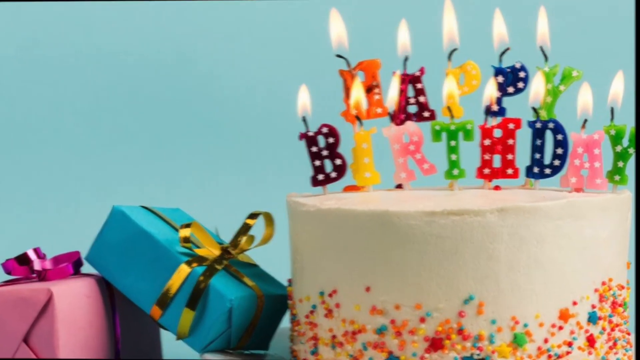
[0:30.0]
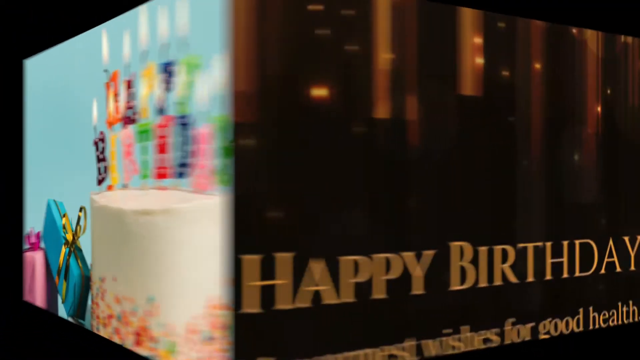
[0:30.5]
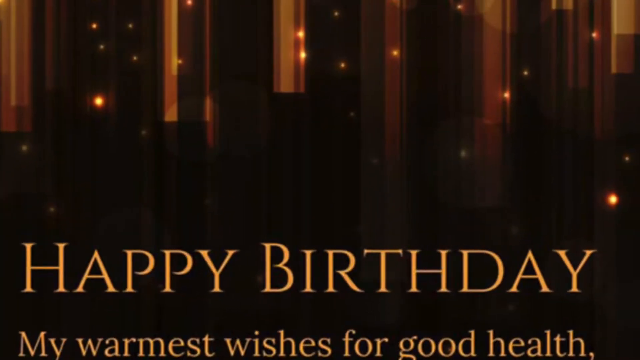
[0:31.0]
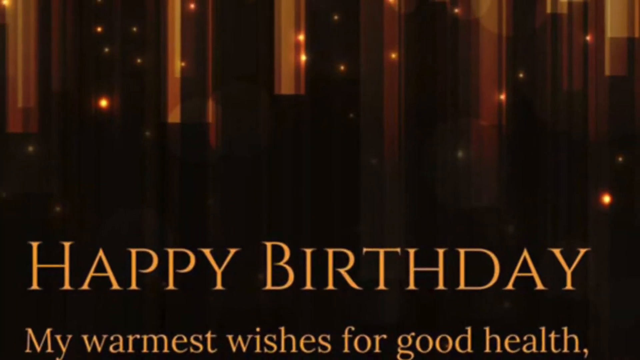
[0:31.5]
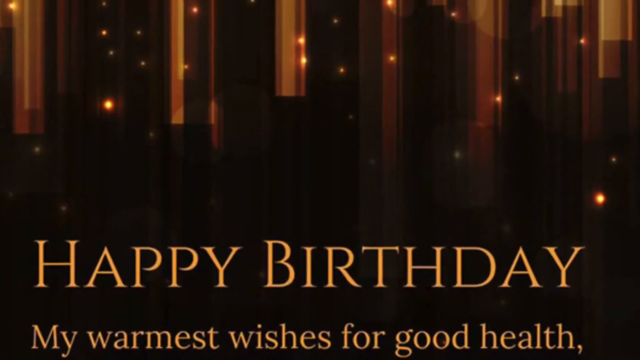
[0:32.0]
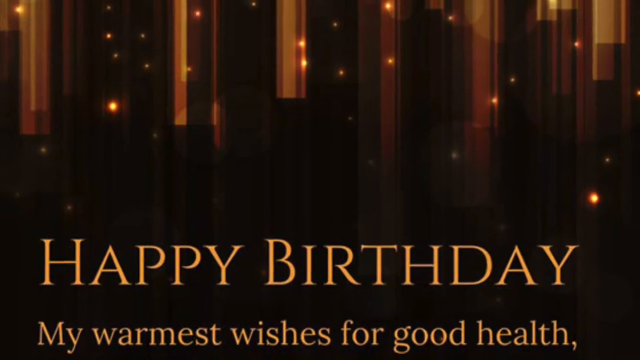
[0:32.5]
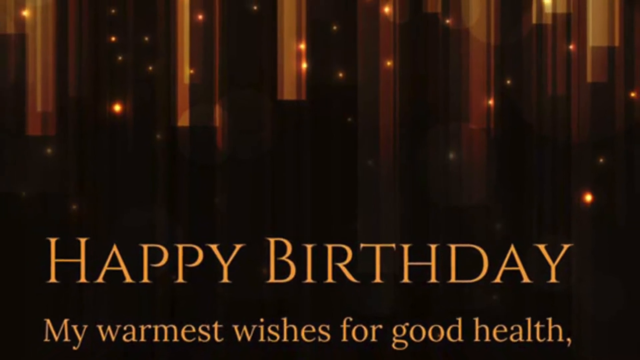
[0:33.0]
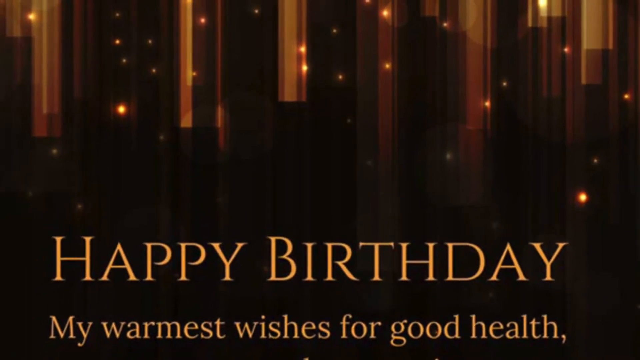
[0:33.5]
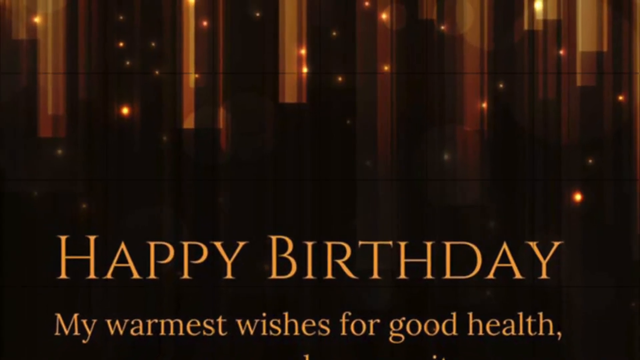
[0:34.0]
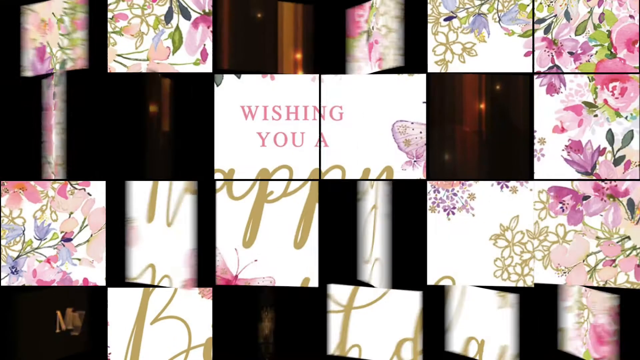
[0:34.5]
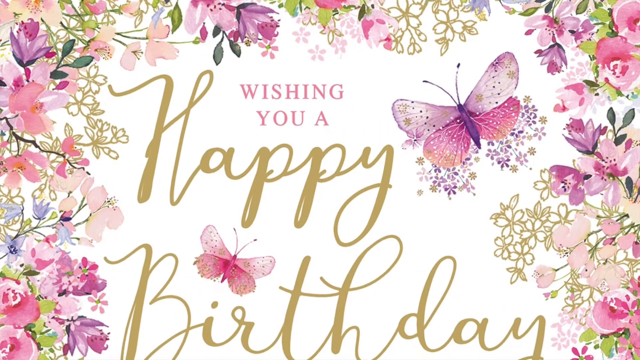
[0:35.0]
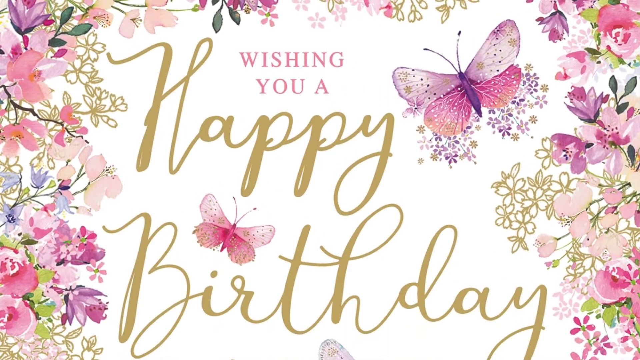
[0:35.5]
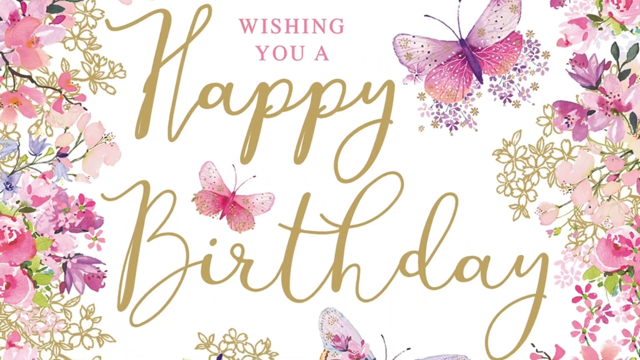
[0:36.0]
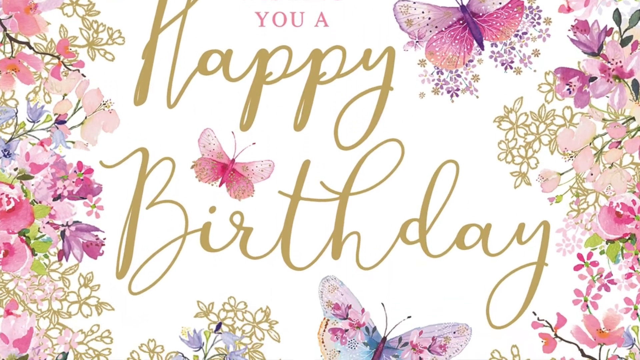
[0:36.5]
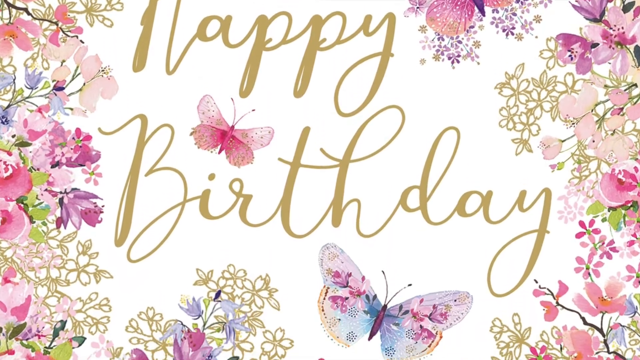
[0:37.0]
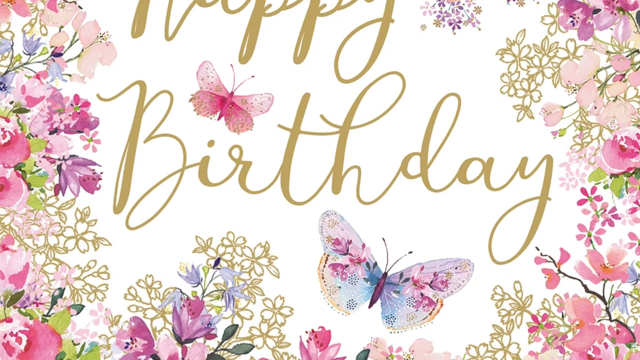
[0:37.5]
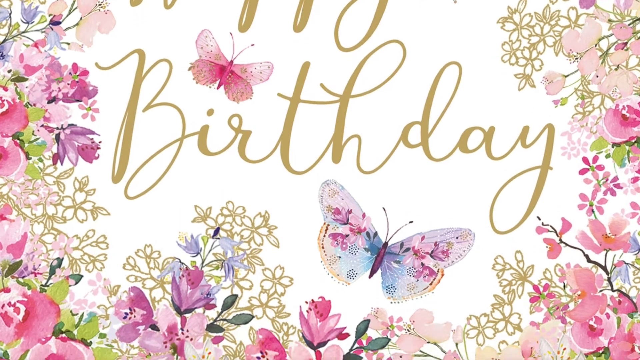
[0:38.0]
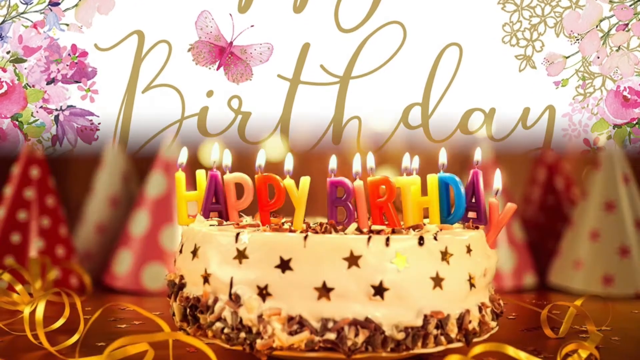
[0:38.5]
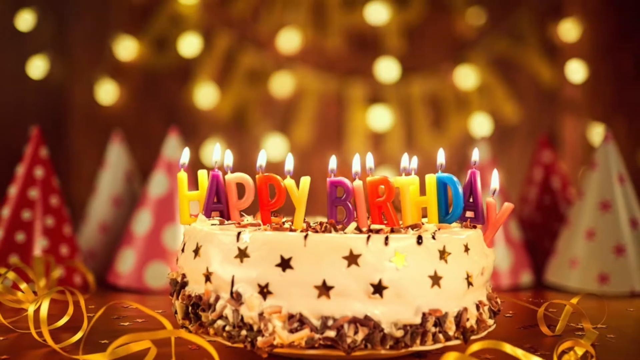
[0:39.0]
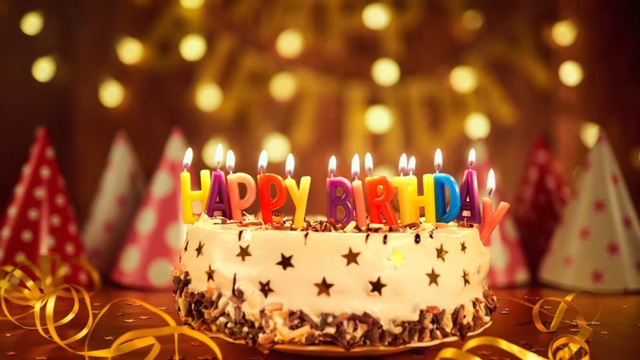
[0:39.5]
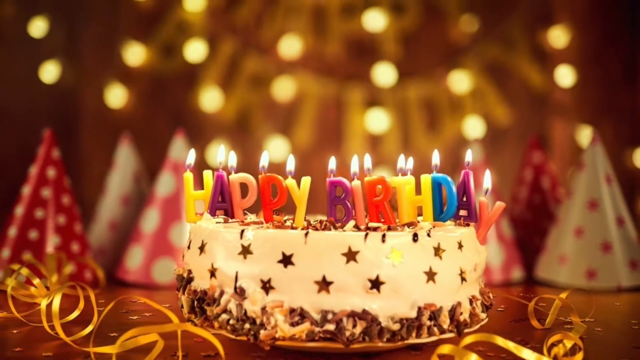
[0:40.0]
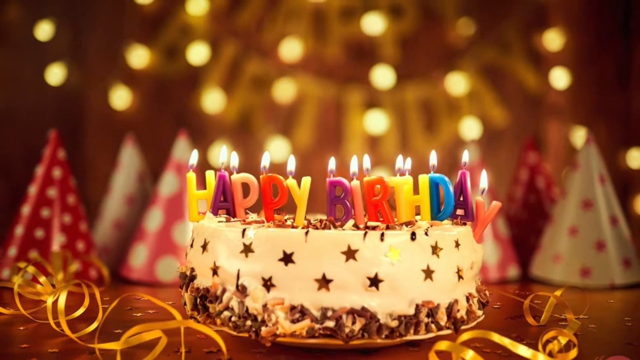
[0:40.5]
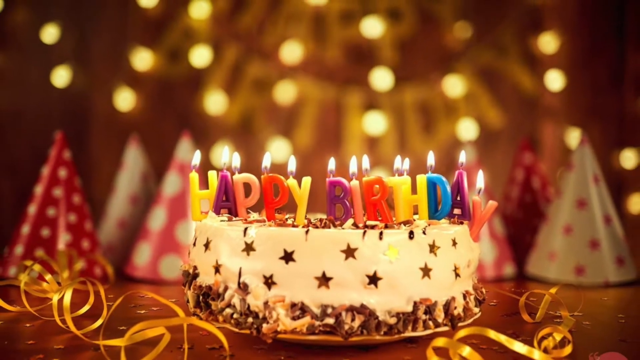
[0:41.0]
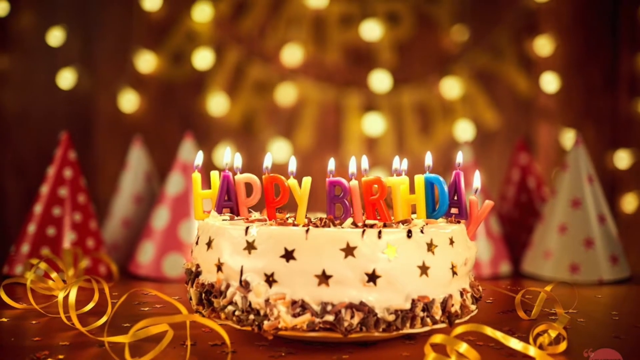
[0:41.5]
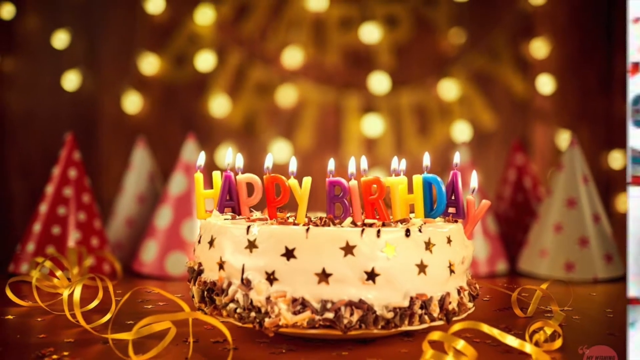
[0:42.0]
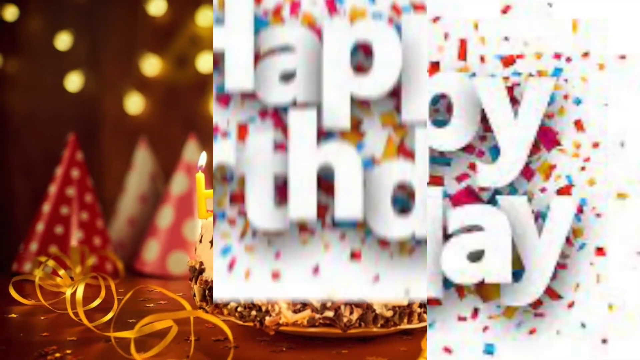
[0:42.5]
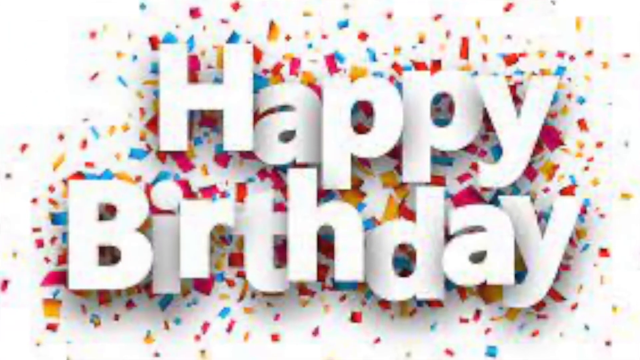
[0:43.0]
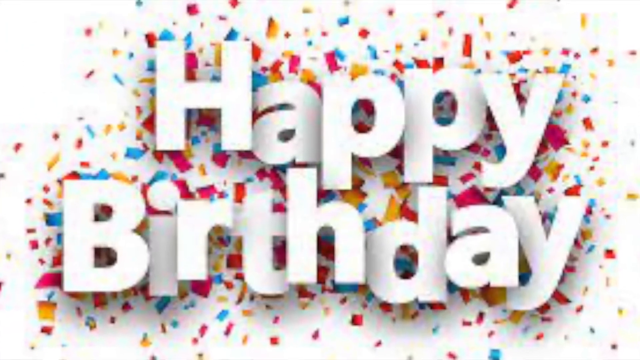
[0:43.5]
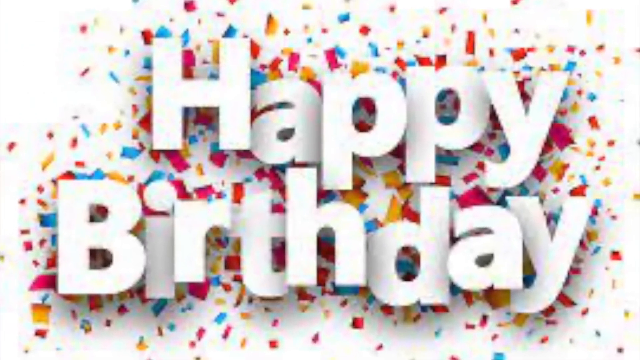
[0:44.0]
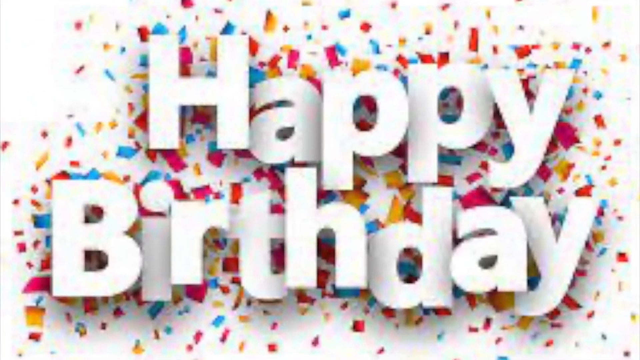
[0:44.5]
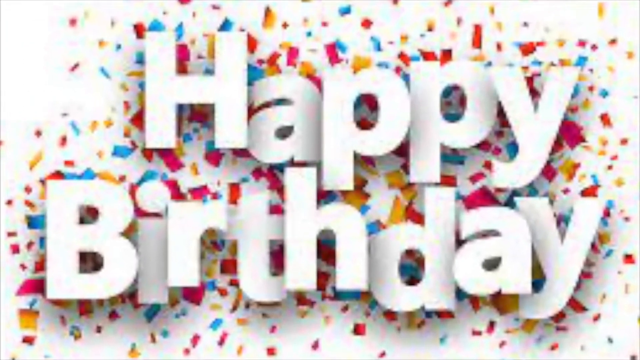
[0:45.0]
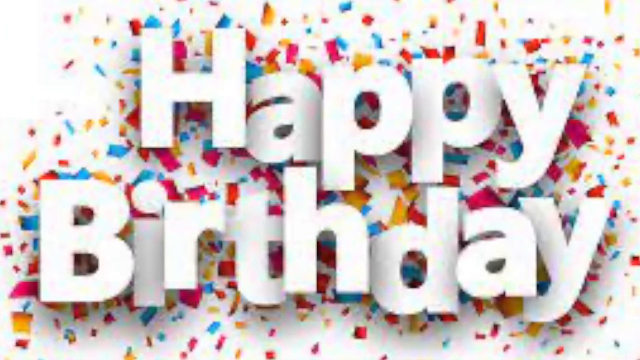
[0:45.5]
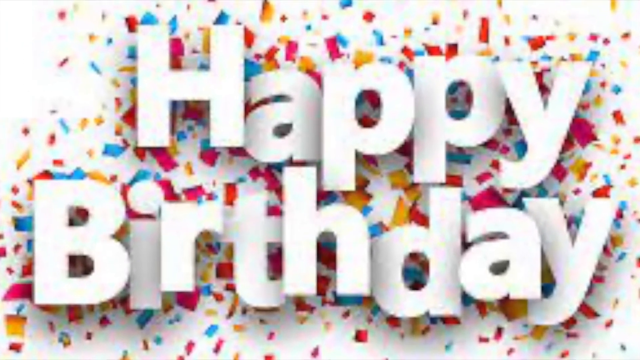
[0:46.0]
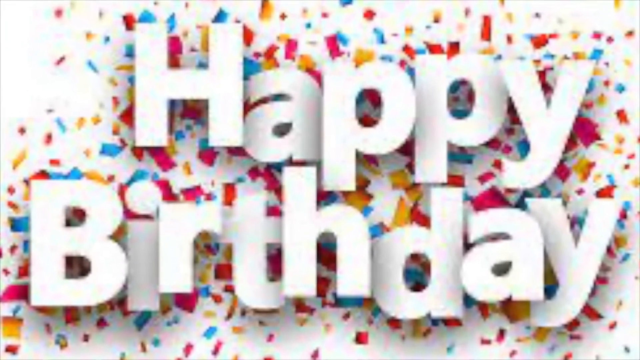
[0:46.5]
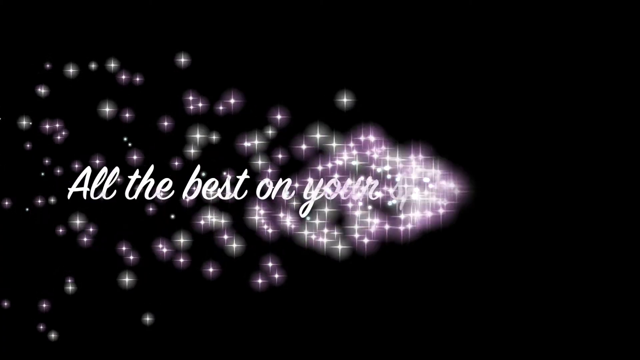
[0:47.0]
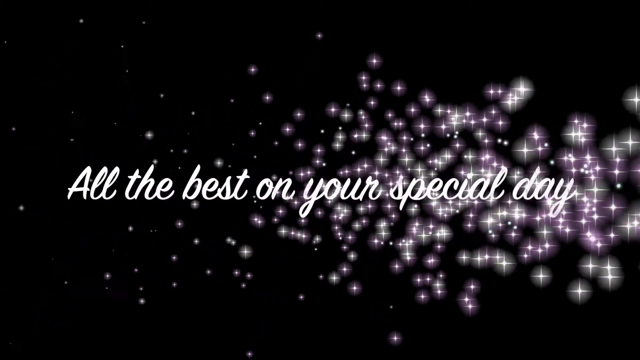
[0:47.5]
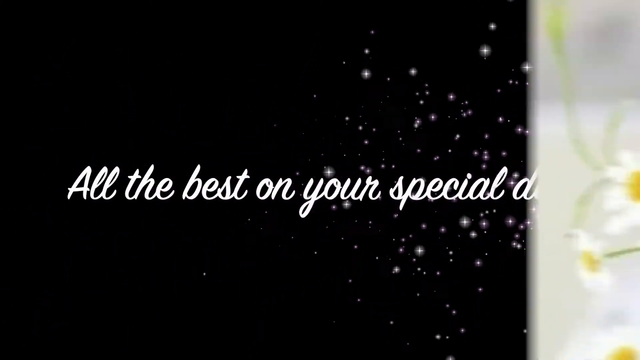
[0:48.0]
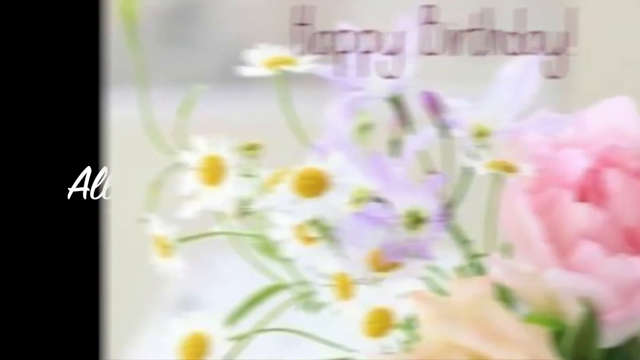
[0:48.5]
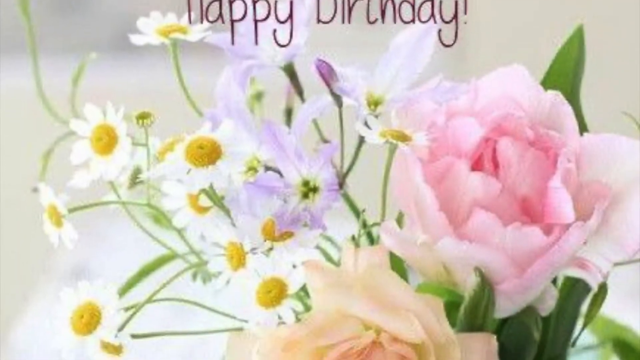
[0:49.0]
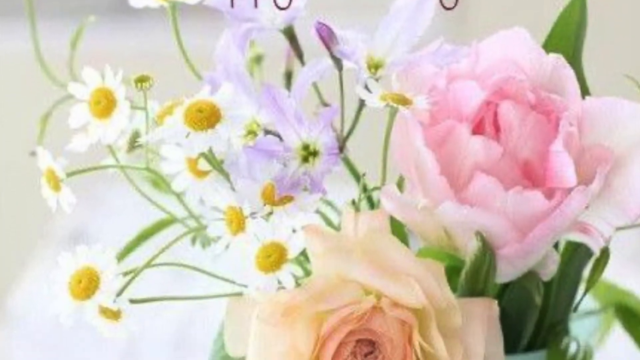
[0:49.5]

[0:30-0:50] A card shows "happy birthday" with each letter as a different colored candle, all lit, on a white cake with sprinkles, with presents on the left-hand side of the frame. The picture twists as though it were on a box being rotated, and another image rotates in: a night skyline with an orange sky, black buildings and orange lights, with "happy birthday" in a regular straight font with no italics or other effects. The view sweeps backward to reveal more of the city skyline, then the image breaks into a bunch of squares that all flip, revealing a different card that says "wishing you a happy birthday"; "happy birthday" is in a yellow-gold color and "wishing you a" is in pink, with butterflies and foliage printed in pink, purple and green behind the text. The card sweeps up, and the video cuts to another image of a cake that says "happy birthday" with each letter a different lit candle; this is a different cake from before, and it has stars on it.